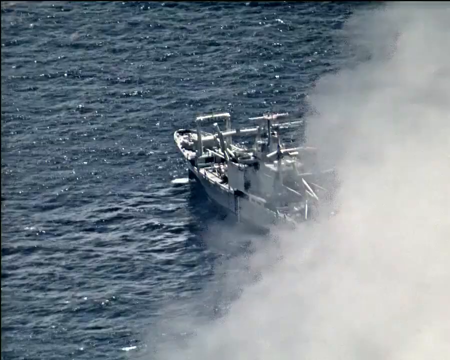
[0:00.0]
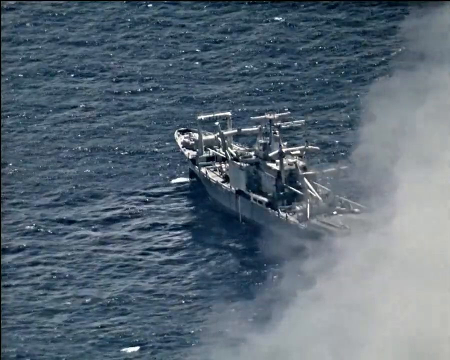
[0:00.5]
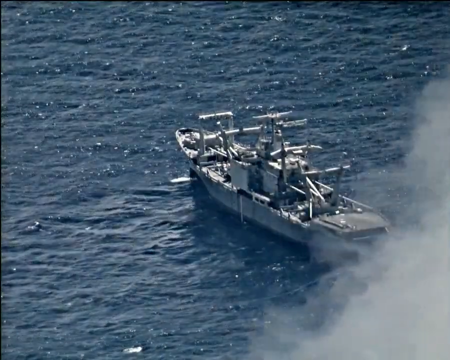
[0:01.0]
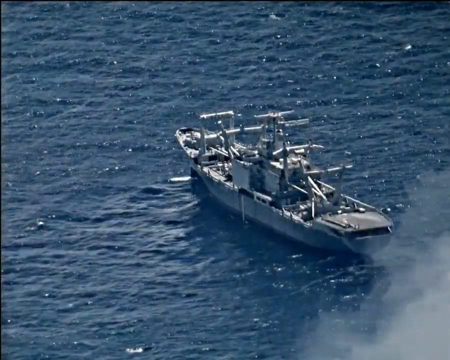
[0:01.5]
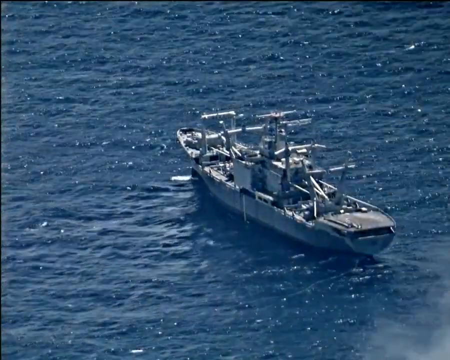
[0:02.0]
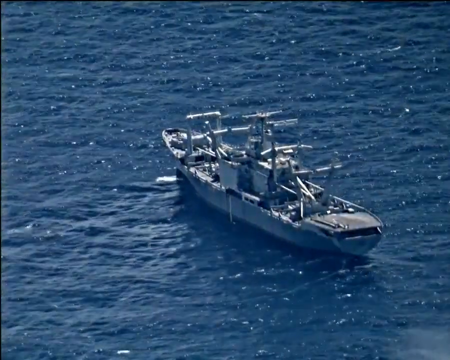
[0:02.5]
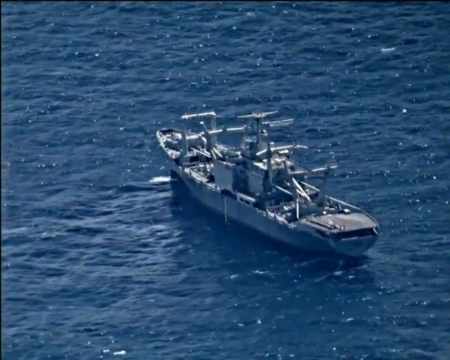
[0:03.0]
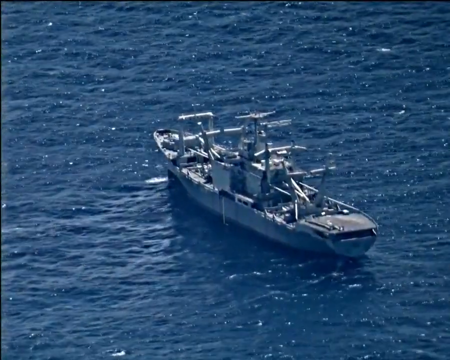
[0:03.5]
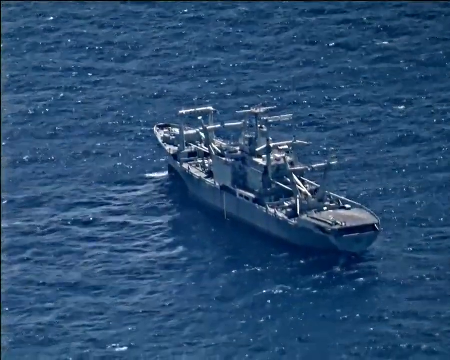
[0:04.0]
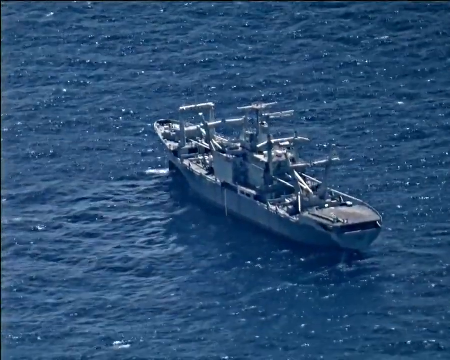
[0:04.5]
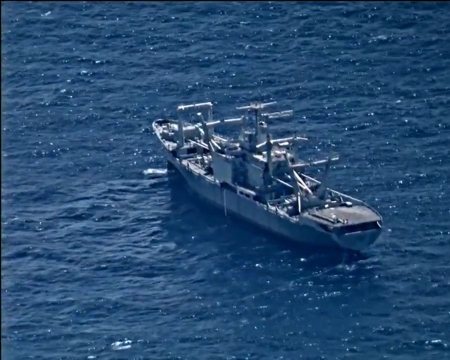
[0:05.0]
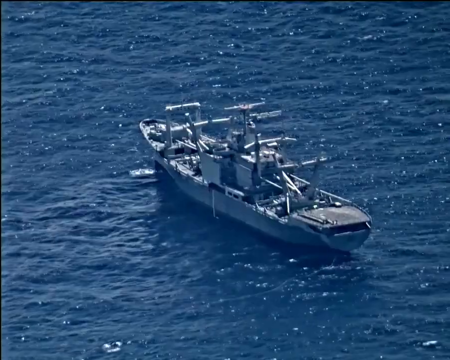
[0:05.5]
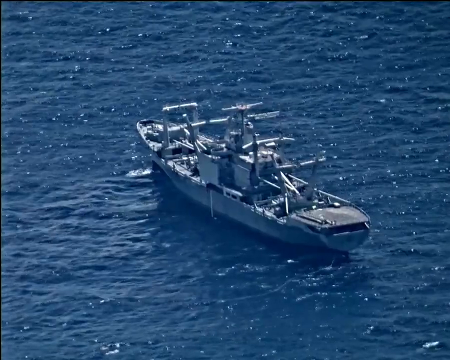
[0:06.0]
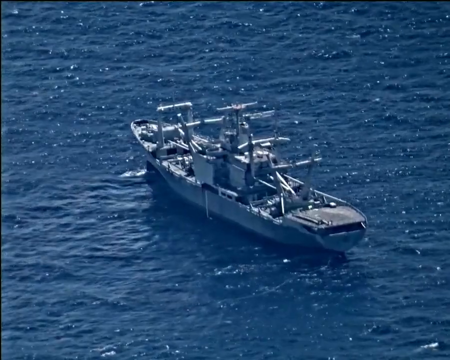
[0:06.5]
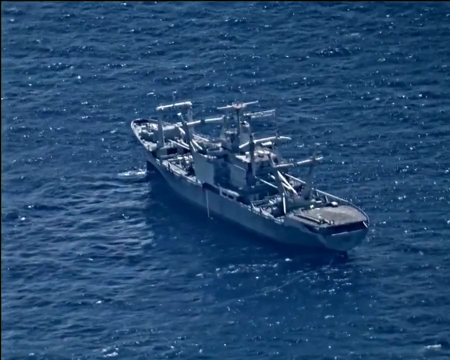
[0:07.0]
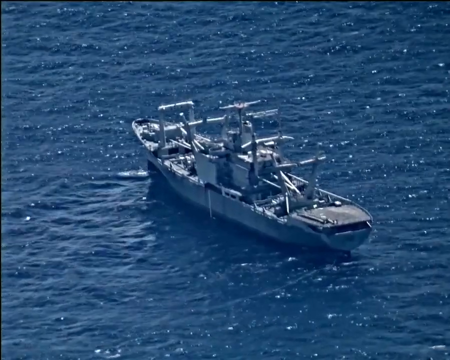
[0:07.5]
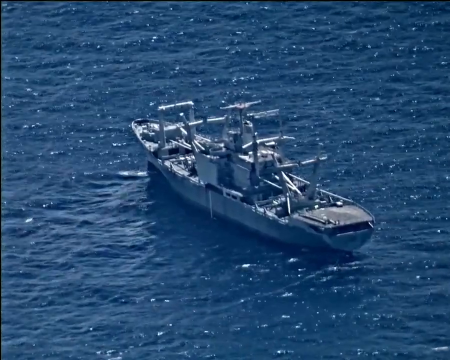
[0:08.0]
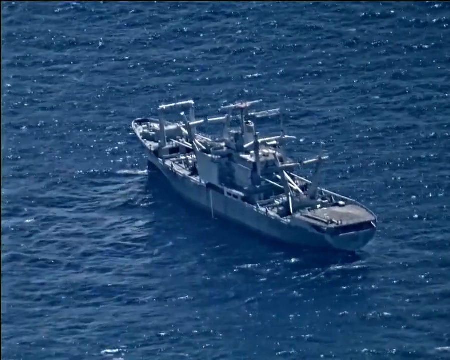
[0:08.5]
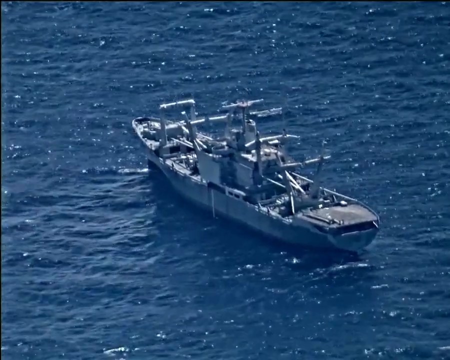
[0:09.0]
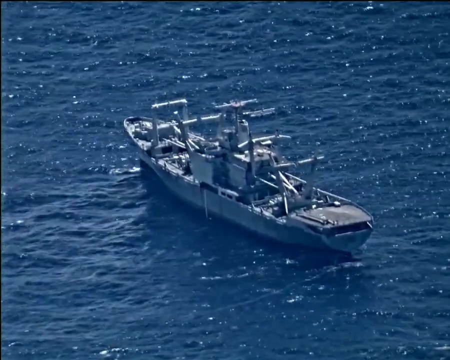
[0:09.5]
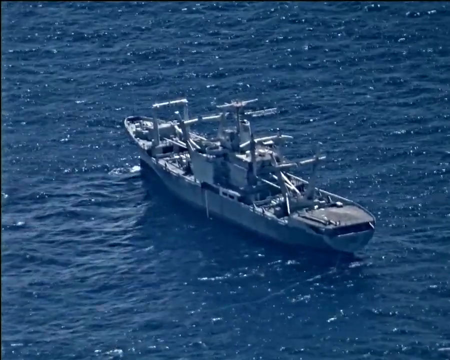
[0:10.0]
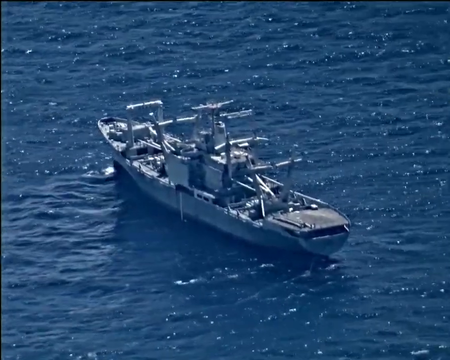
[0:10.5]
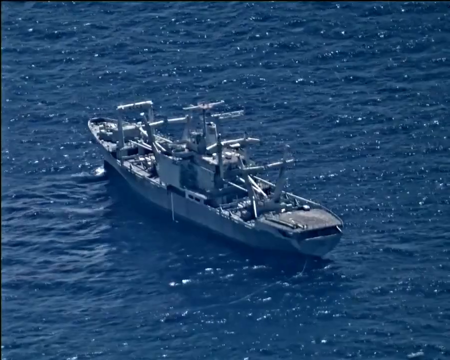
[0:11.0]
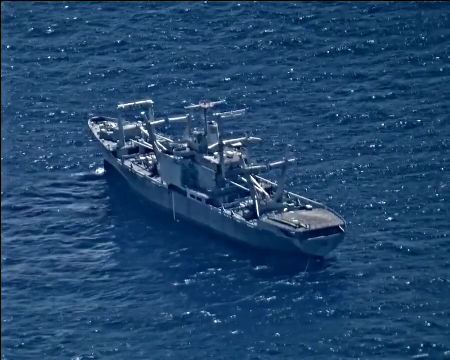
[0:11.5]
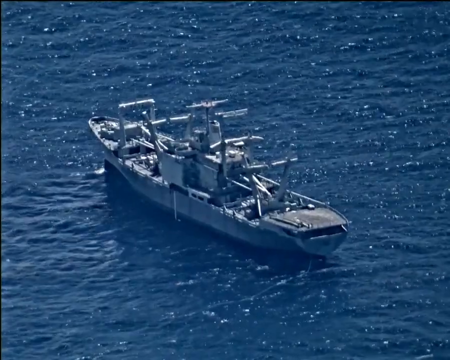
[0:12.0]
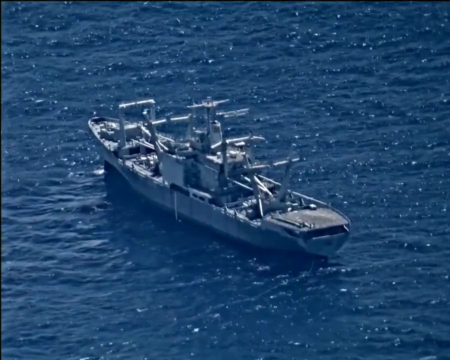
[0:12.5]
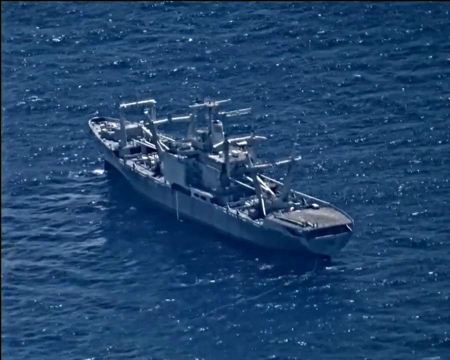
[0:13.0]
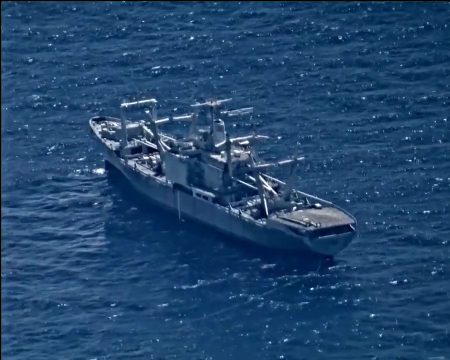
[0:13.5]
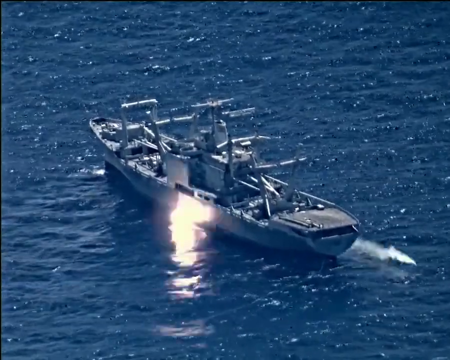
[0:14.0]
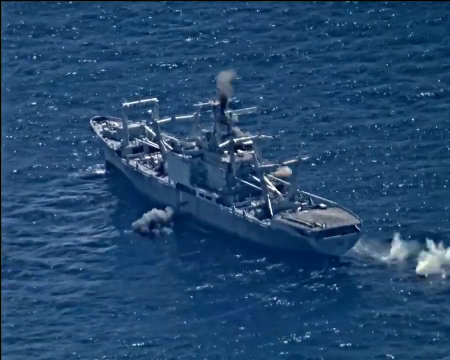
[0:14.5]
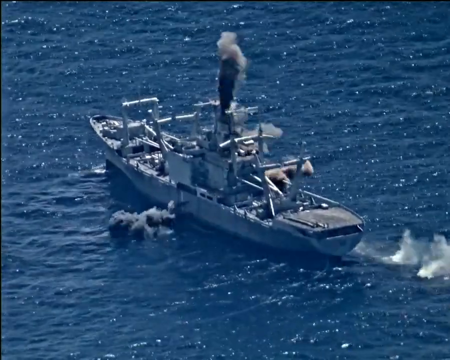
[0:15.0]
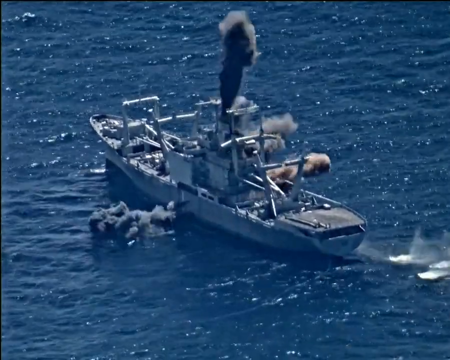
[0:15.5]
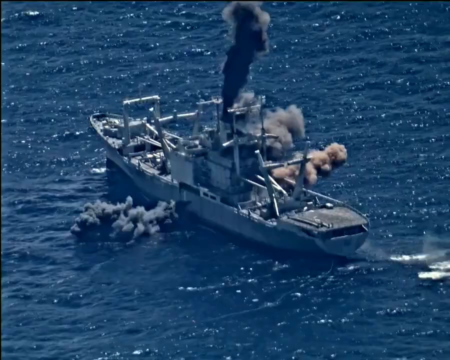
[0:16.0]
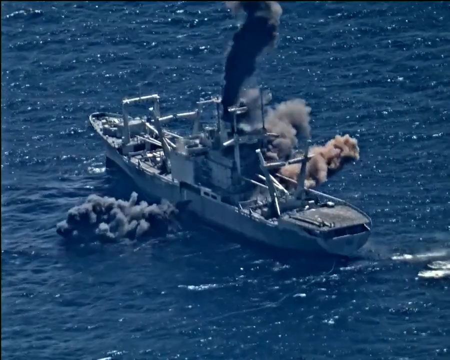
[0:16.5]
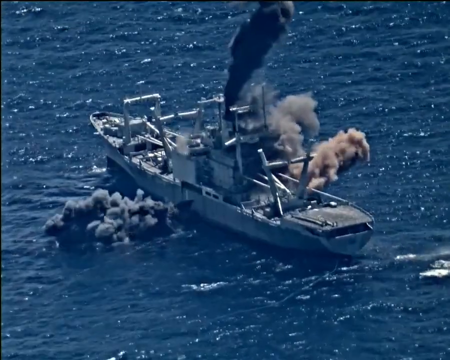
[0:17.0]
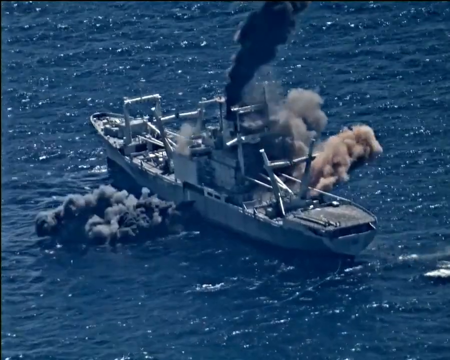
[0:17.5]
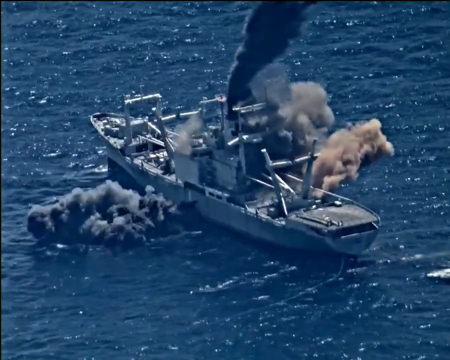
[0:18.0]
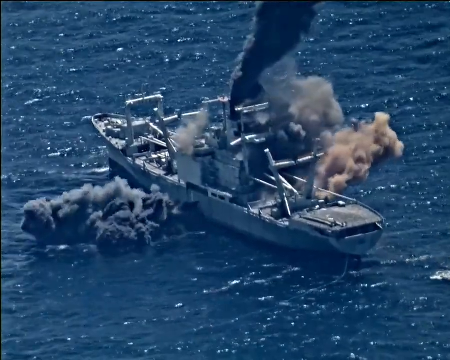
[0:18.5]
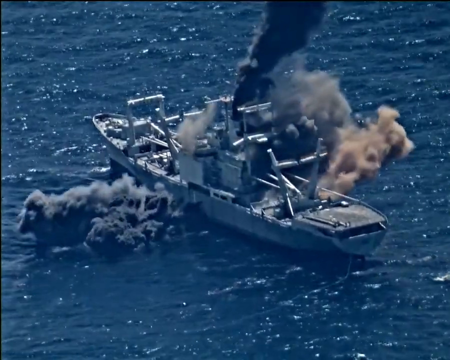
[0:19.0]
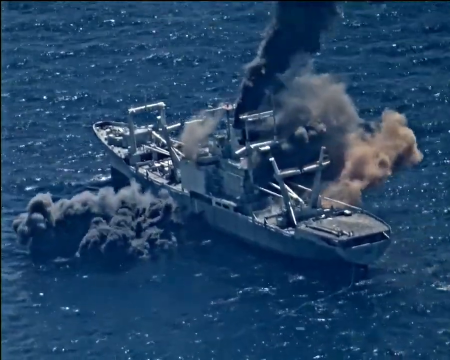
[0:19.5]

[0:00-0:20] A ship sits out on the water, with some clouds that seem to dissipate. It is a large battleship, apparently, with the ocean all around it, and it just sits there. Then suddenly black smoke starts billowing out of the sides, about midway down the ship on the left and the right, and straight out of the center of the top. The ship appears to be being blown up and sunk.